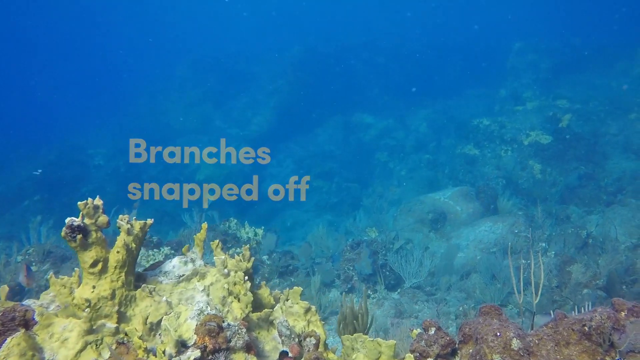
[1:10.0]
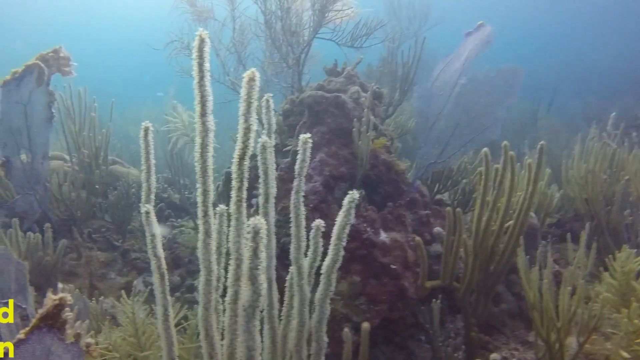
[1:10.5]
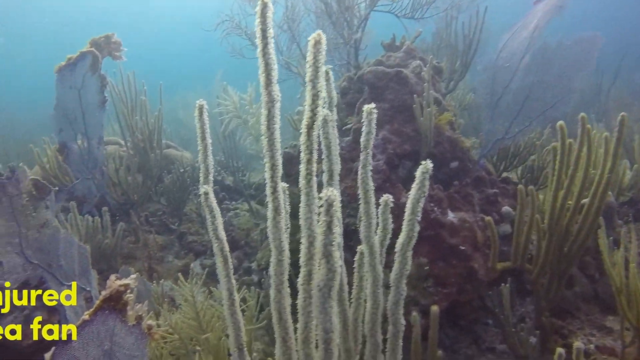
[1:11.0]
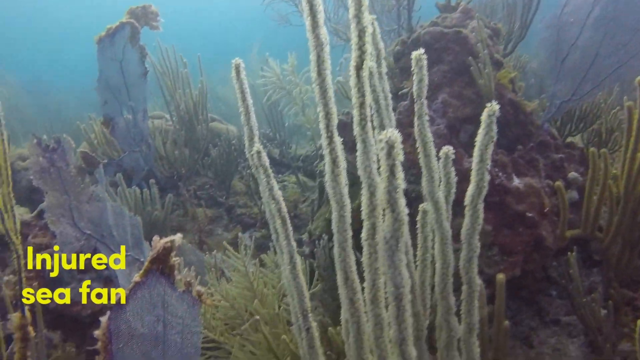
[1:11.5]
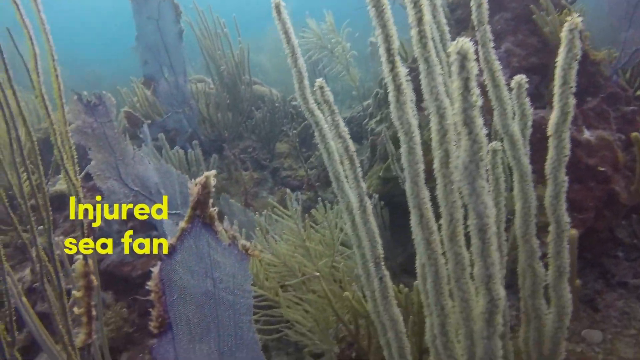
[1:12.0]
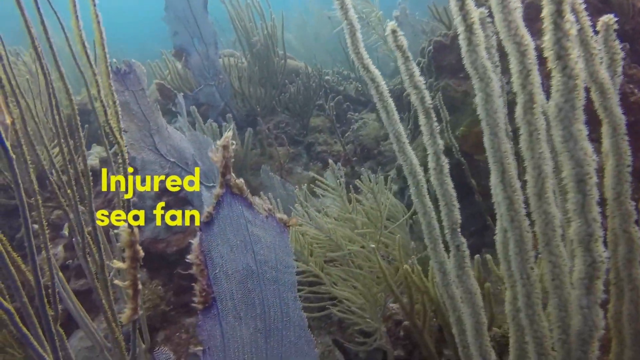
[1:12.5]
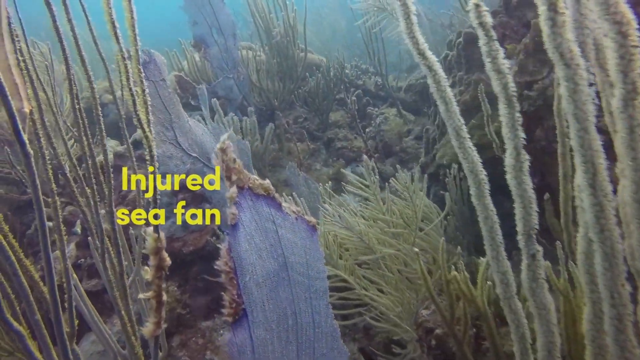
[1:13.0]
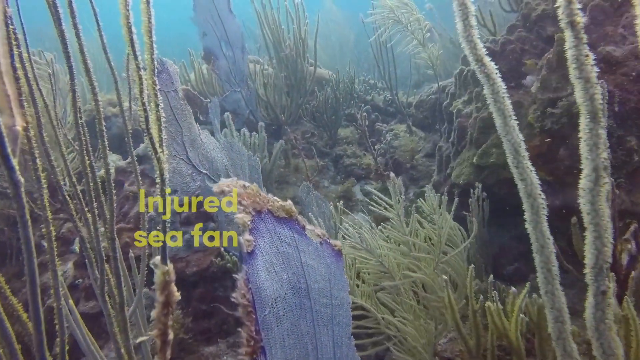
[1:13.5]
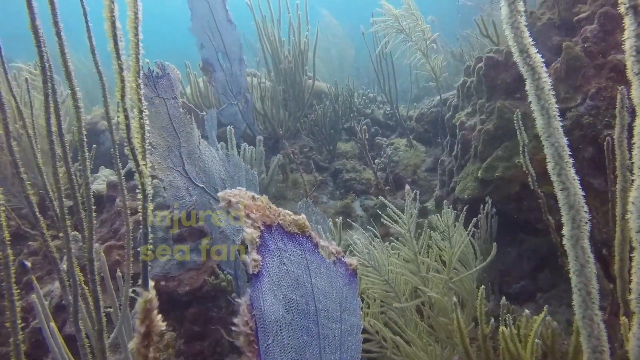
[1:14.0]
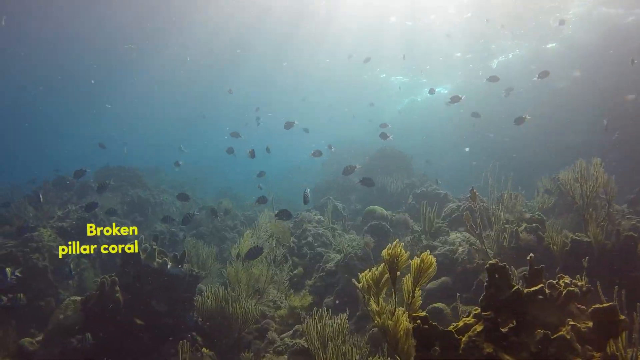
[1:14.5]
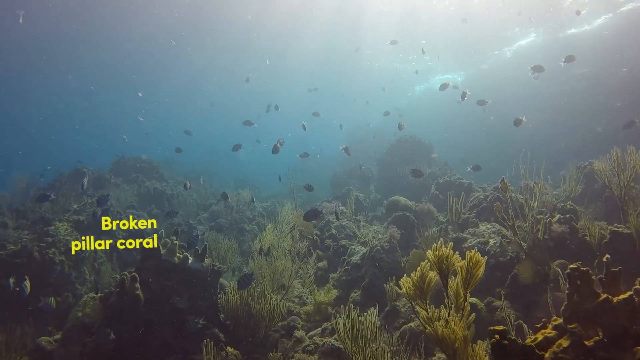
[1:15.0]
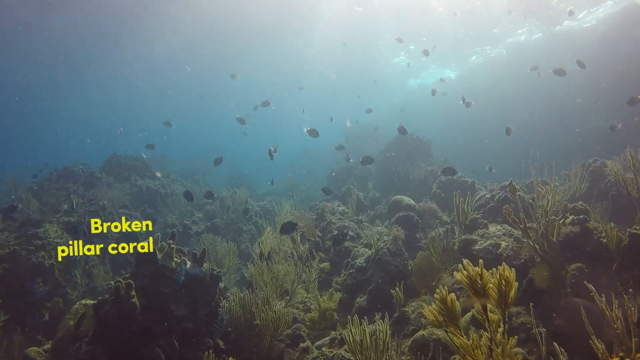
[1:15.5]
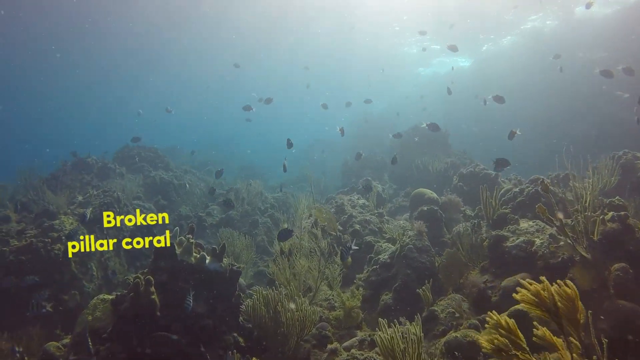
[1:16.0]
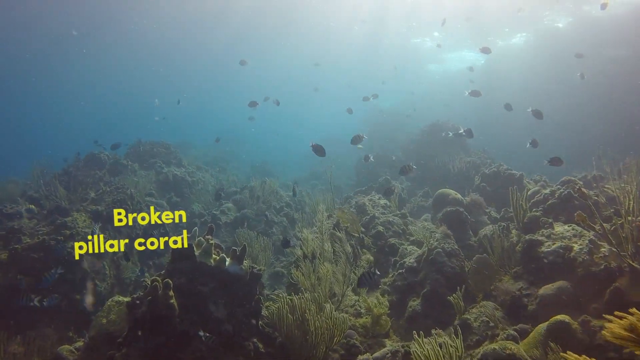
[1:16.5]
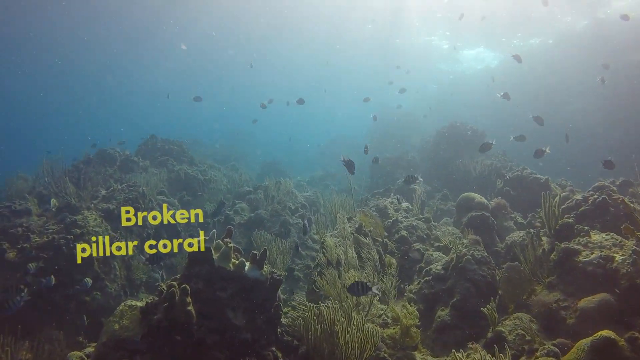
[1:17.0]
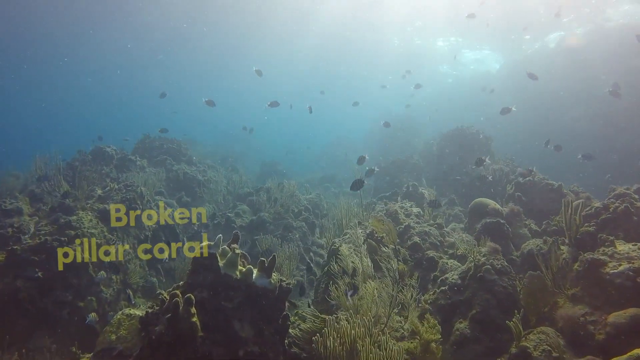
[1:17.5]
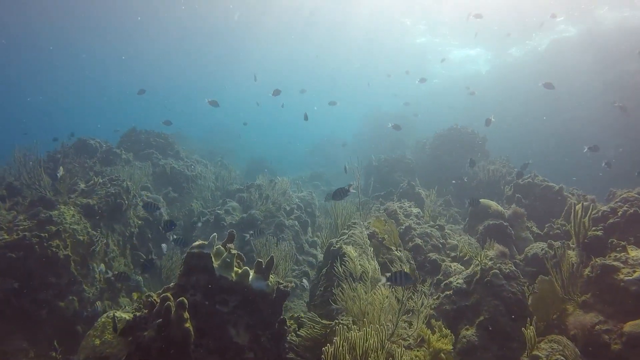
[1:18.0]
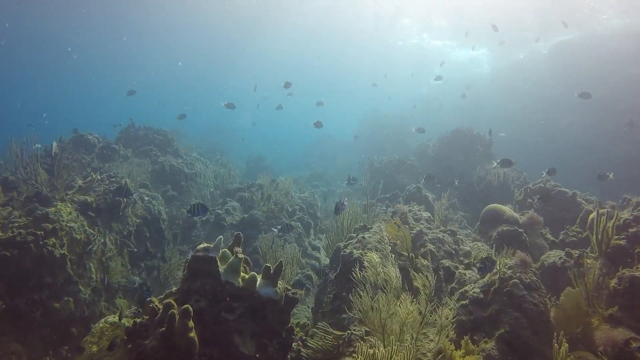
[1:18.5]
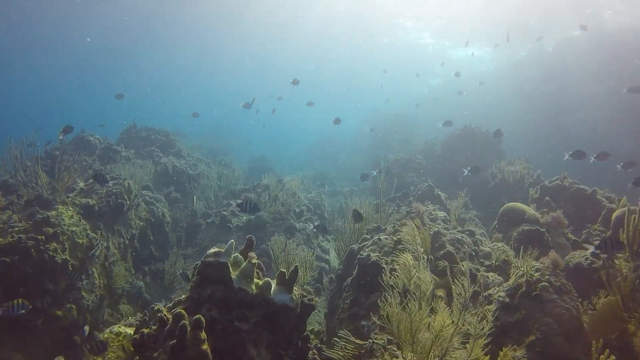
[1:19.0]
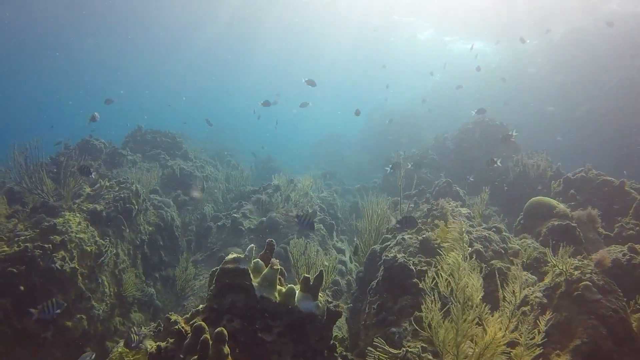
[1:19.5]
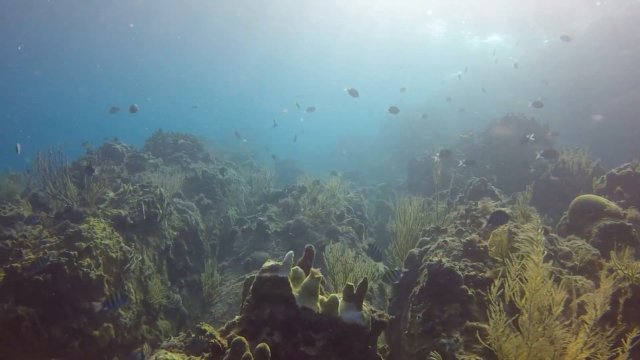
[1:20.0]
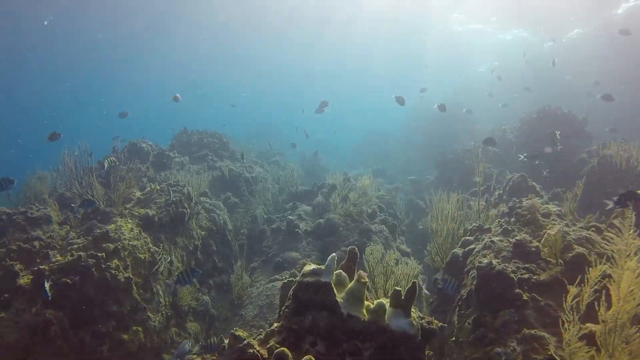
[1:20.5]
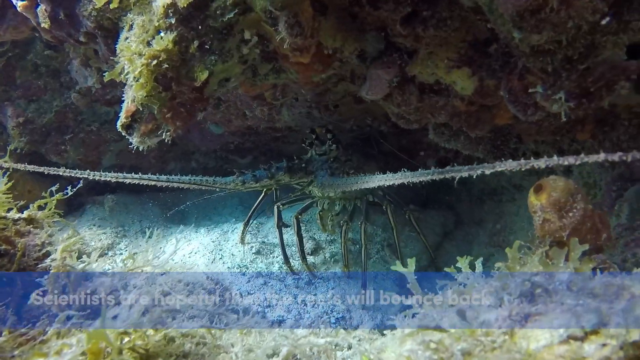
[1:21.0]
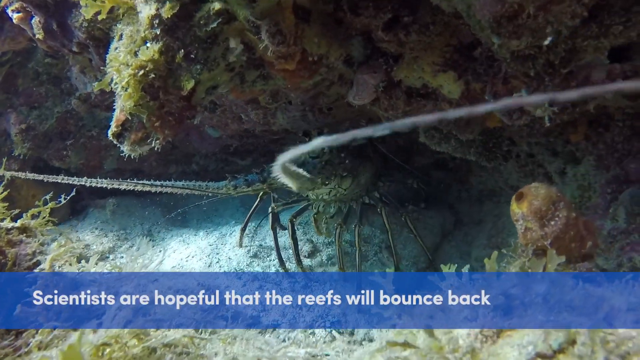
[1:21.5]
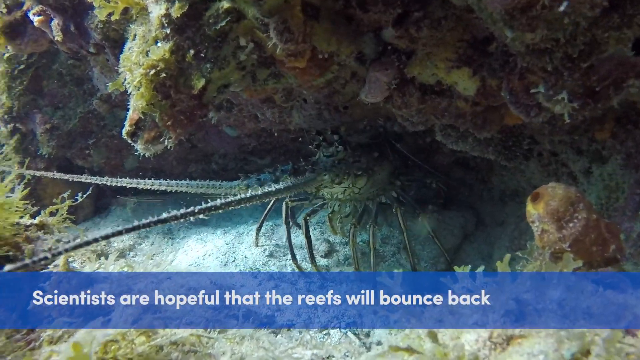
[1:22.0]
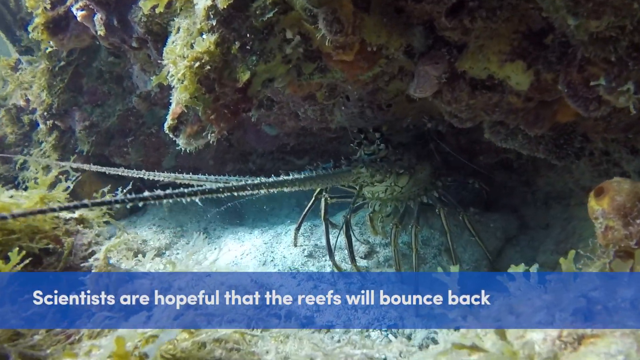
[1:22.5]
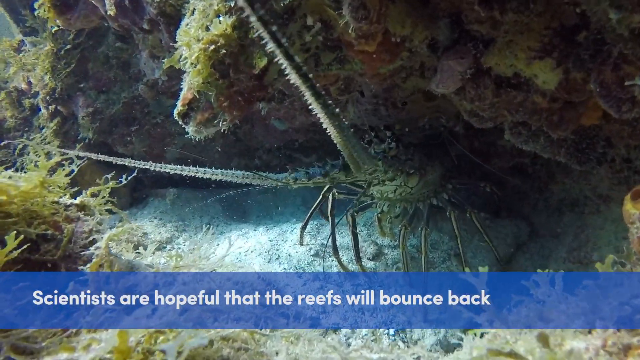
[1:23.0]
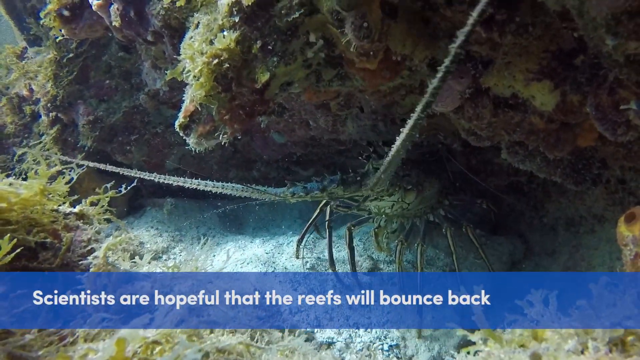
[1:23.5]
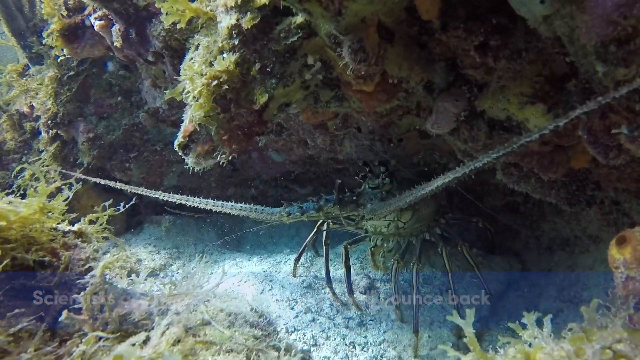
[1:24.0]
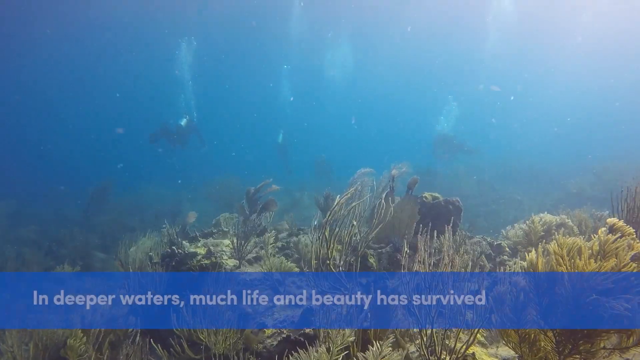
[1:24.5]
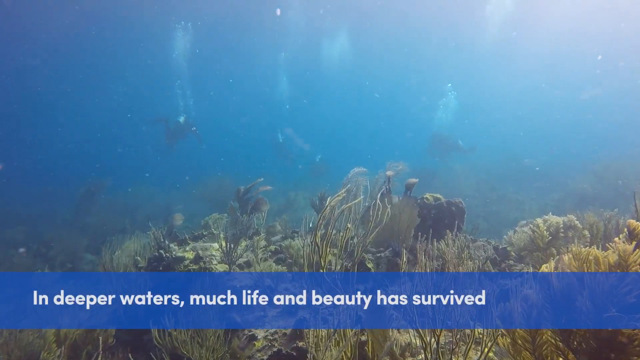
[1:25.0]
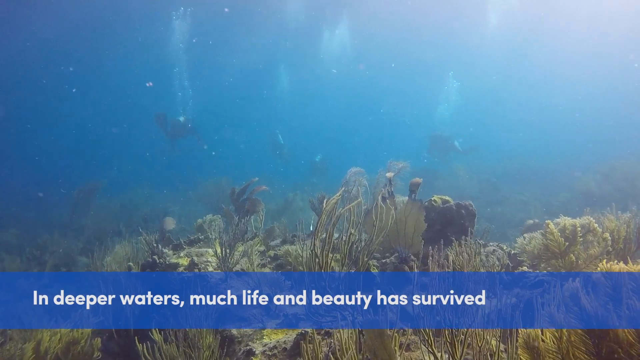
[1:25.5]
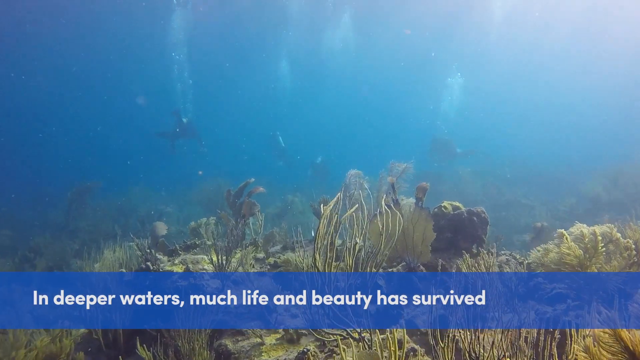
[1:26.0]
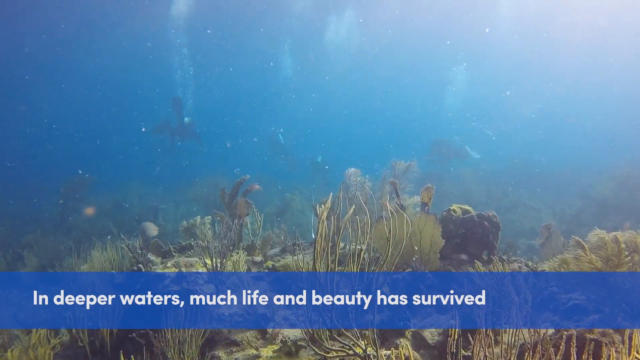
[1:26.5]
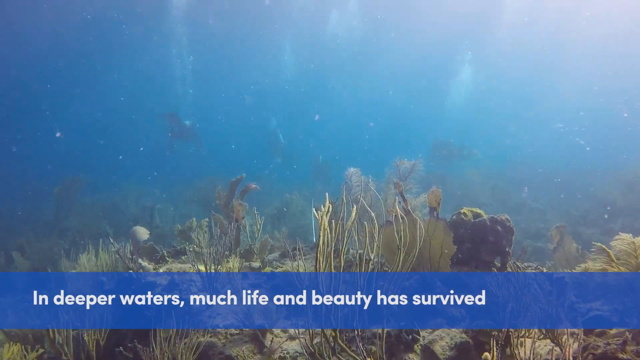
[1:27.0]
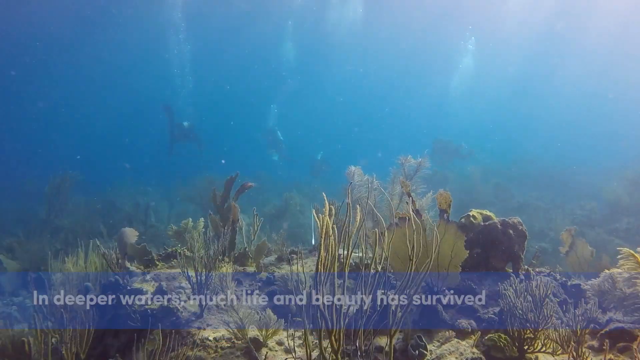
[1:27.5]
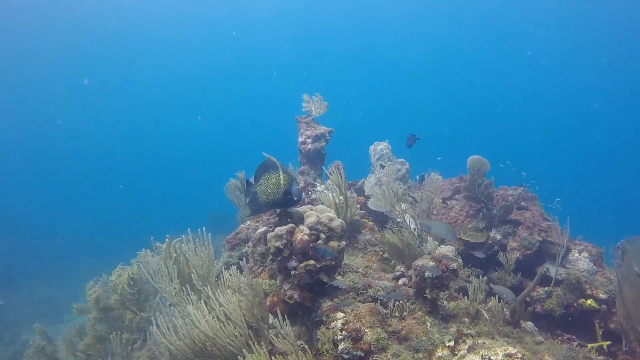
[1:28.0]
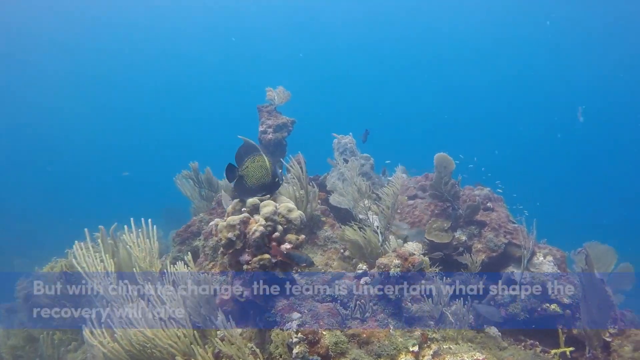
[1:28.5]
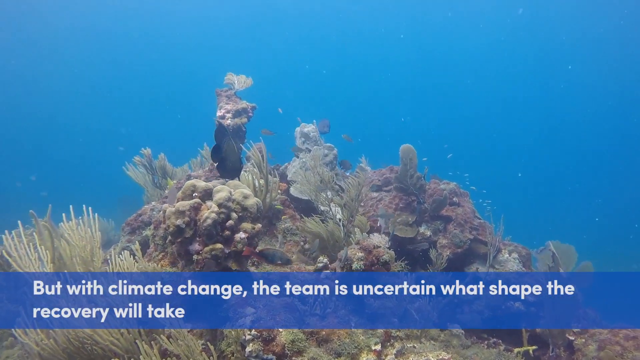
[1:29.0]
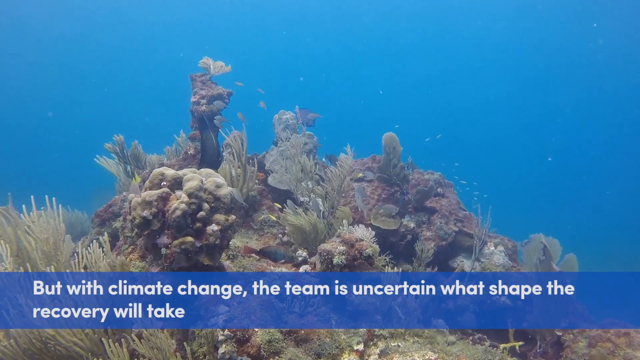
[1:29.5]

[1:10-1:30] The yellow text "branches snapped off" fades out over a yellow coral. A vast ocean with a blue background appears, with the label "injured sea fan". A blue coral with tall grasses is in the sea. Then "broken pillar coral" appears, with some dark coral on the left, and it fades out. Text then reads "signs that are hopeful that the reefs will bounce back" and "In the deeper waters, much life and beauty has survived", followed by text beginning "But with climate change". Many piles of corals are shown. Each word set in yellow font disappears after some time.